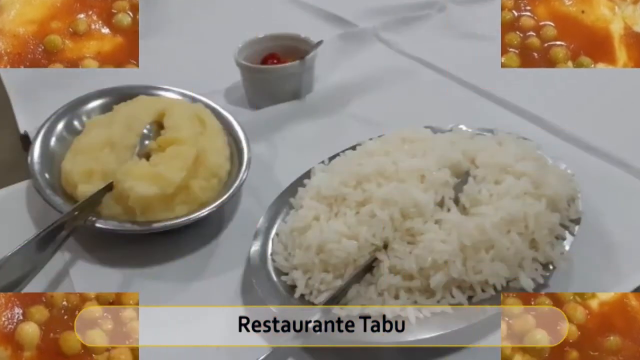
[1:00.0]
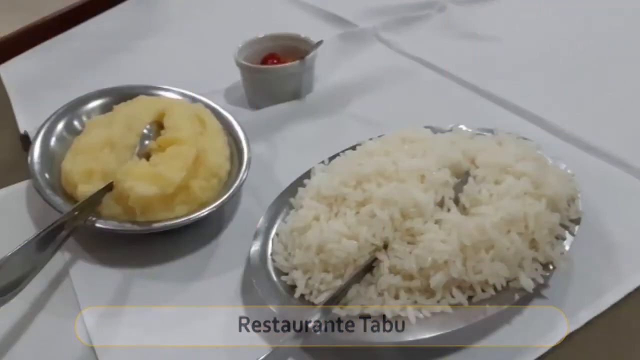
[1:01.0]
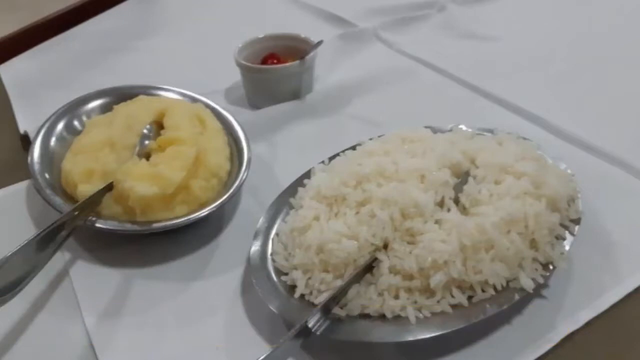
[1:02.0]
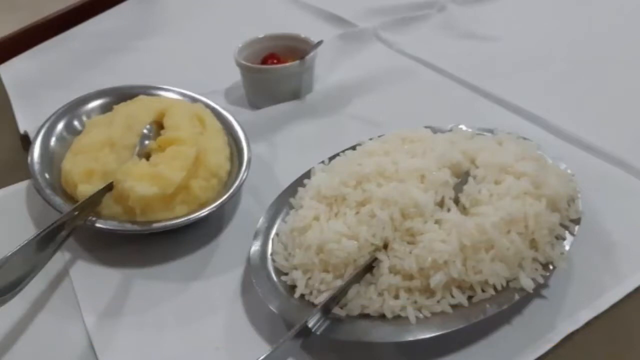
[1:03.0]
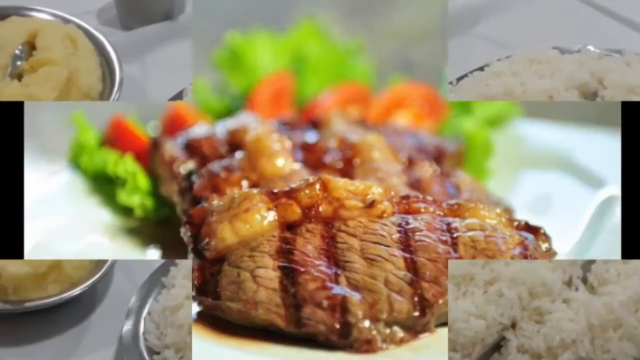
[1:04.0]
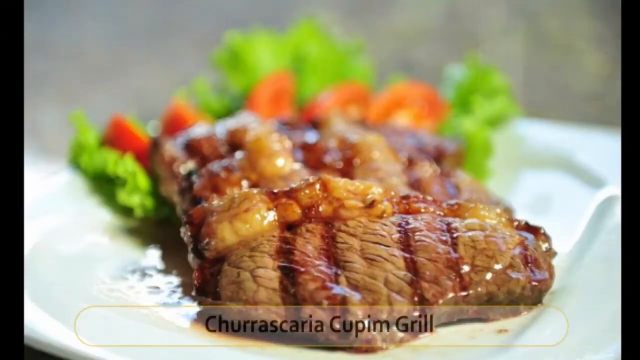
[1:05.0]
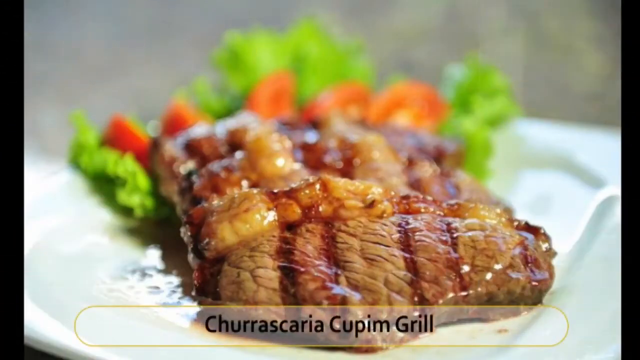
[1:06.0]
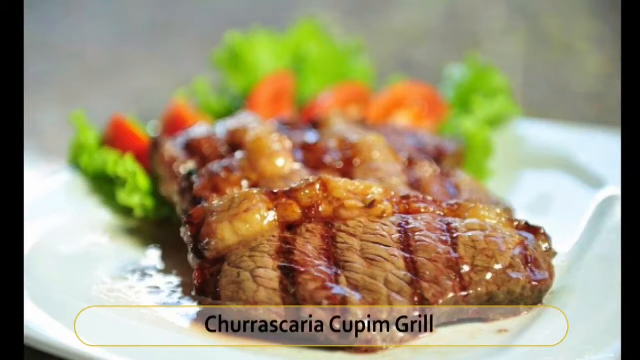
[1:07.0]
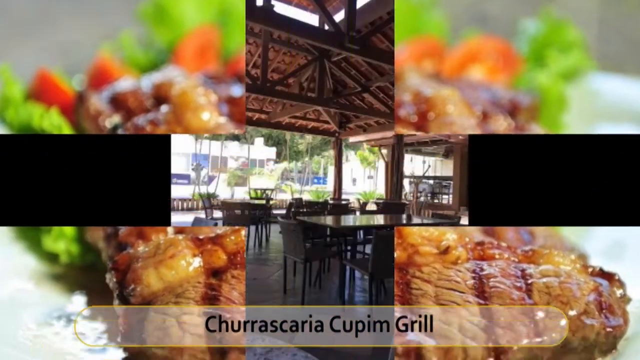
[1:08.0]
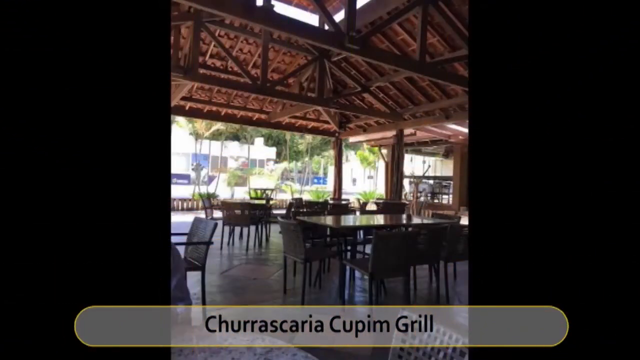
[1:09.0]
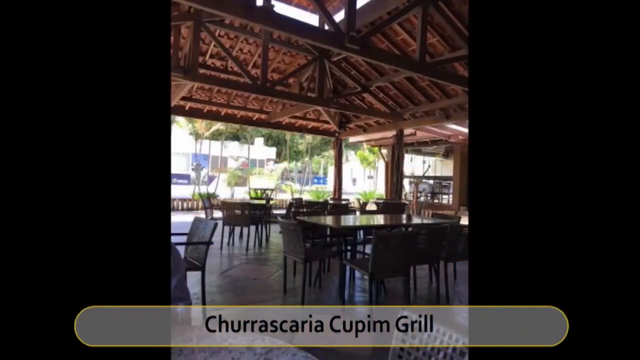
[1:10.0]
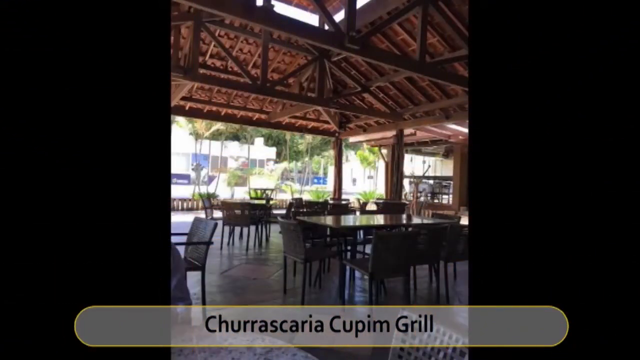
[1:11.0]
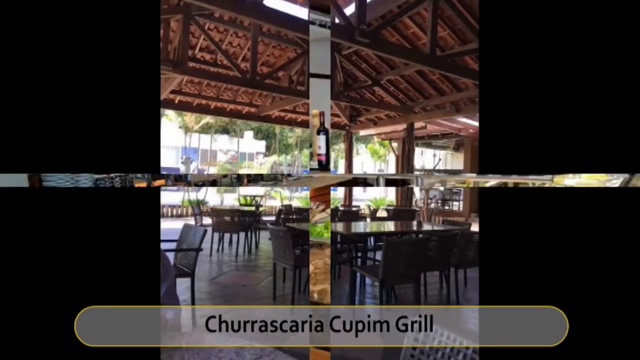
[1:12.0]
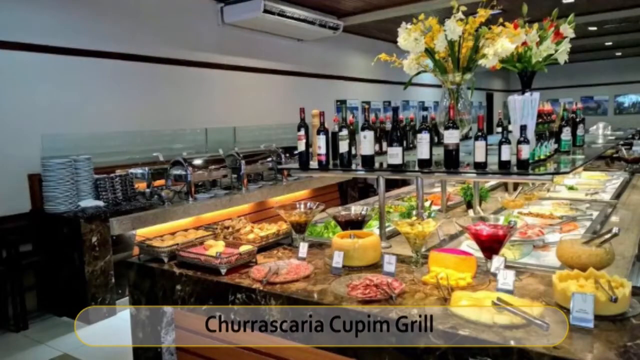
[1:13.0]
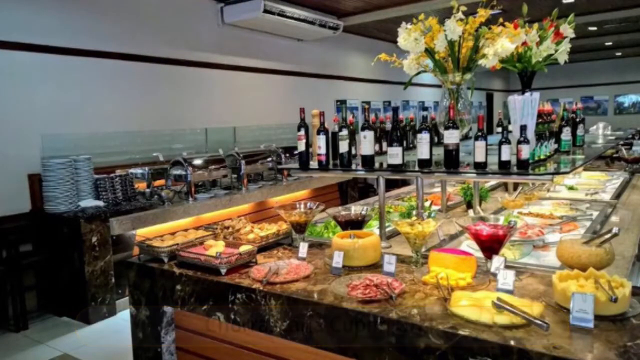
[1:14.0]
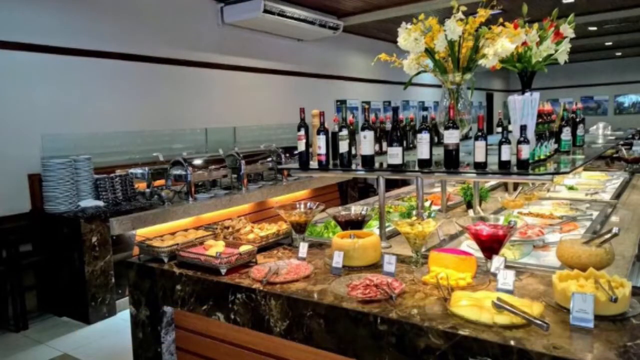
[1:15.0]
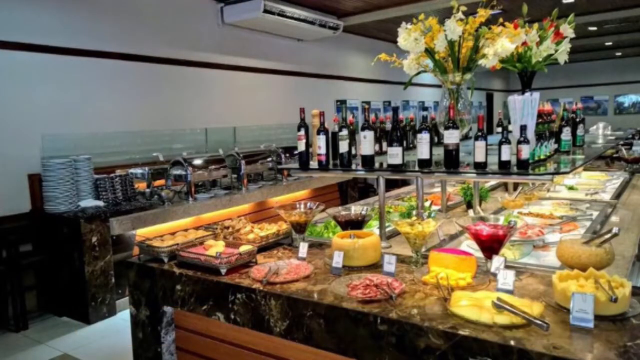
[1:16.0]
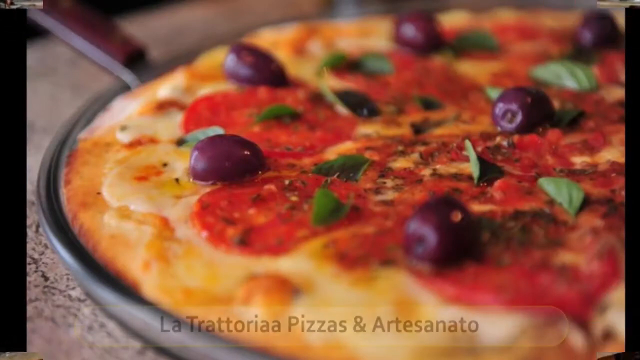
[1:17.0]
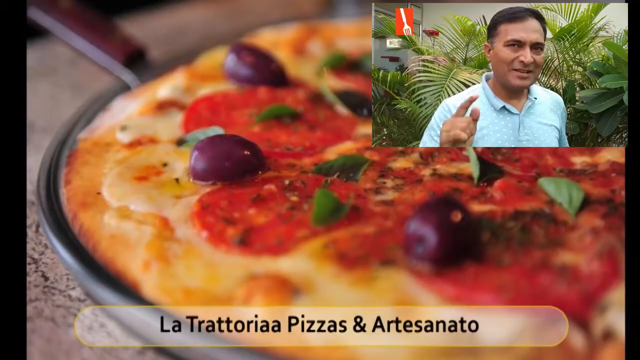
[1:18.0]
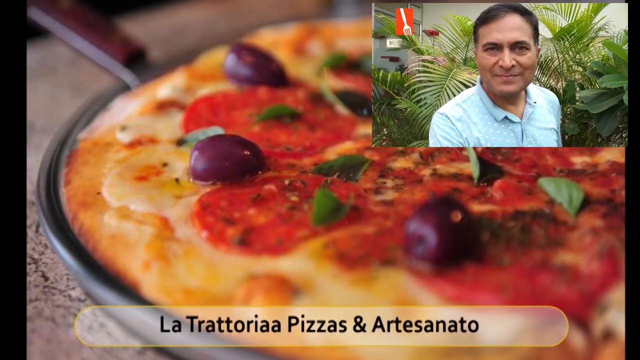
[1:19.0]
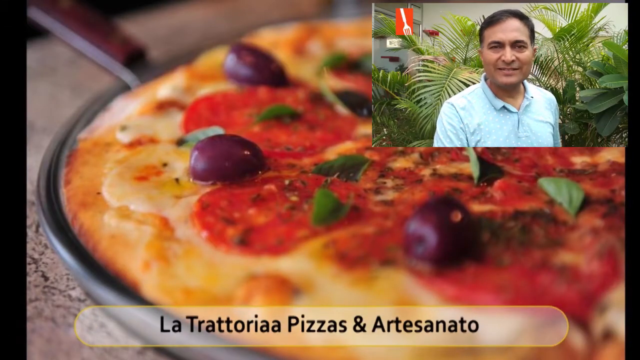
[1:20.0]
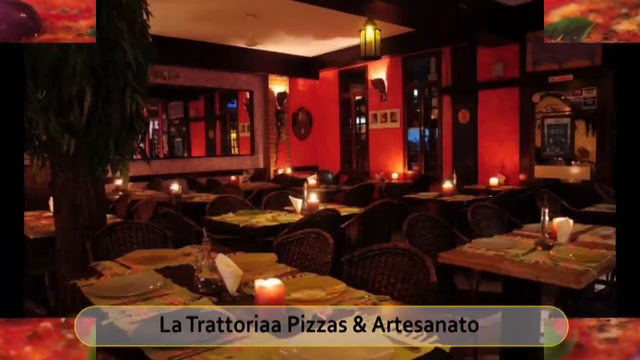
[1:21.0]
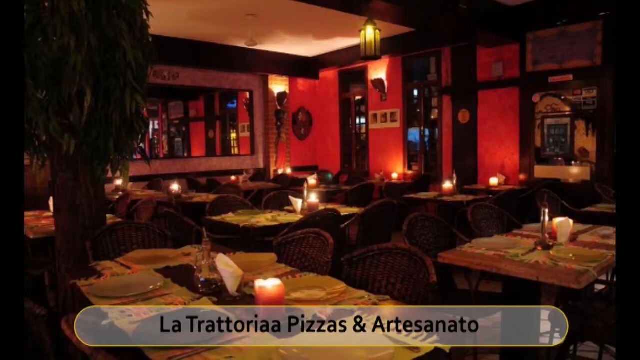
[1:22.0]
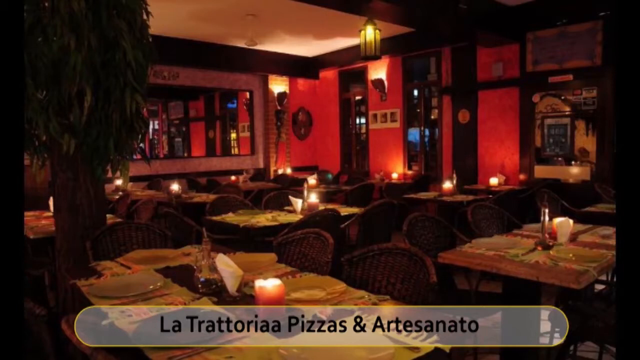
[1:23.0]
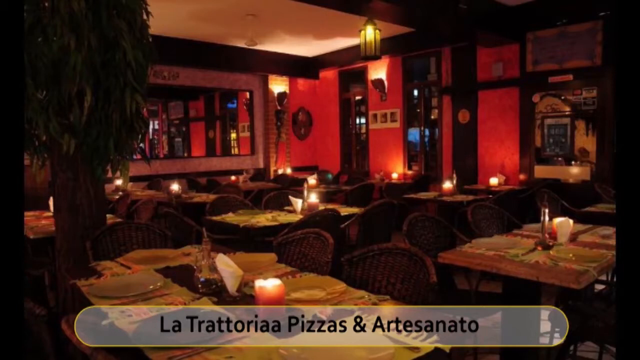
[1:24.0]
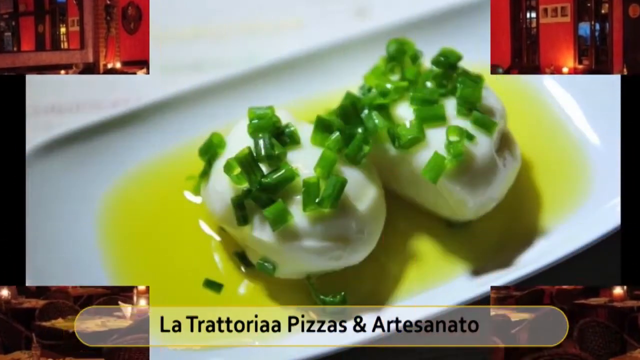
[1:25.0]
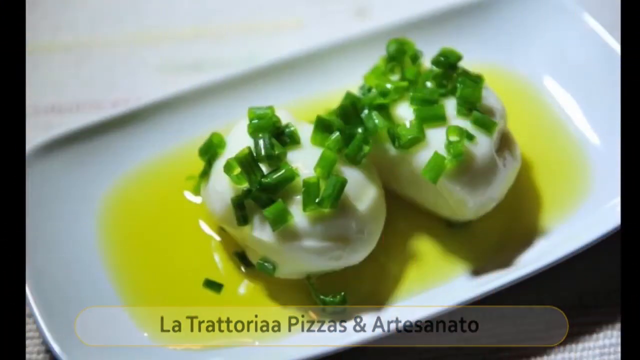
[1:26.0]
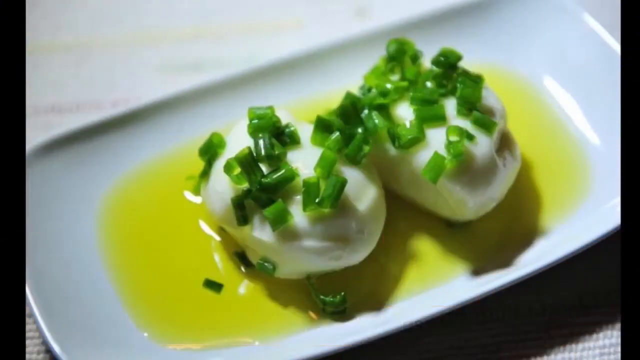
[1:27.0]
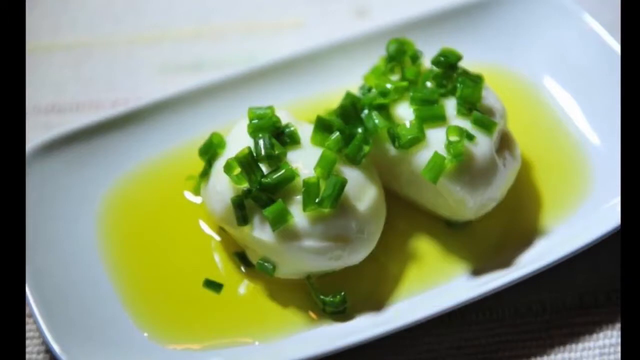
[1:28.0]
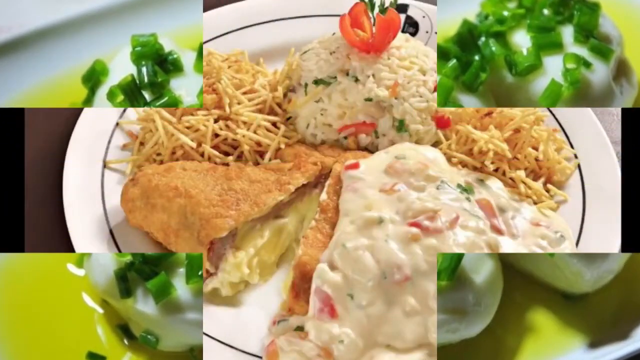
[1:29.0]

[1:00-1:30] Two plates of food are on a table; one looks like mashed potatoes and the other looks like rice. A transition pulls the image at the upper left, upper right, lower right and lower left corners, revealing a close-up image of a meat-like product on a plate of food. Another transition of the same kind shows what looks like a vacant restaurant with multiple chairs and tables. After the transition happens again, a kitchen in a restaurant is shown, with multiple layers of food on a table and a second level of the table holding bottles of fluid.